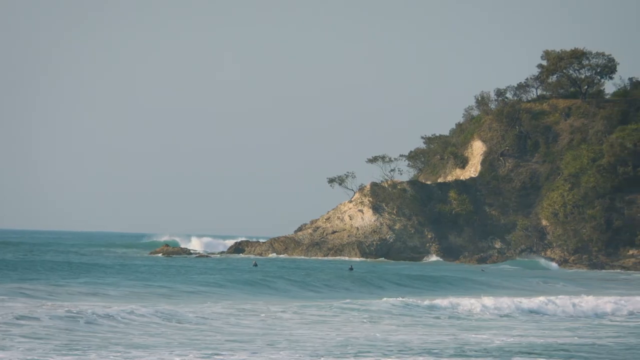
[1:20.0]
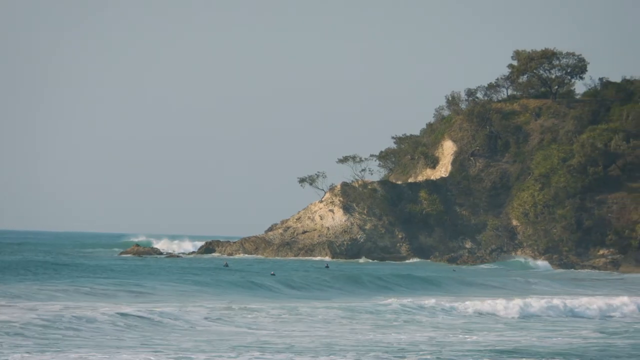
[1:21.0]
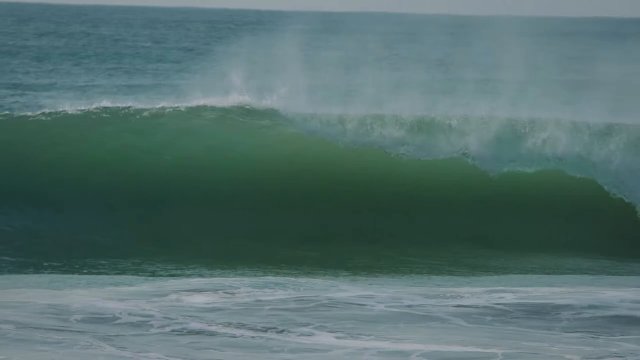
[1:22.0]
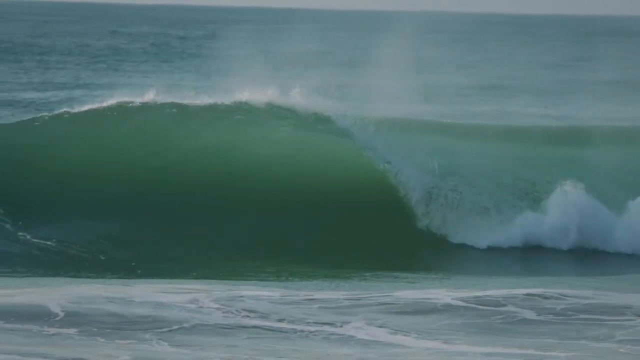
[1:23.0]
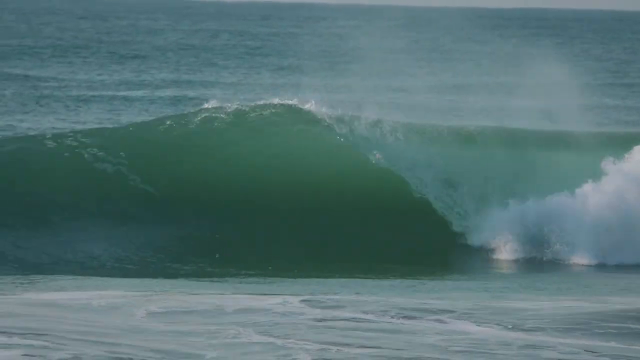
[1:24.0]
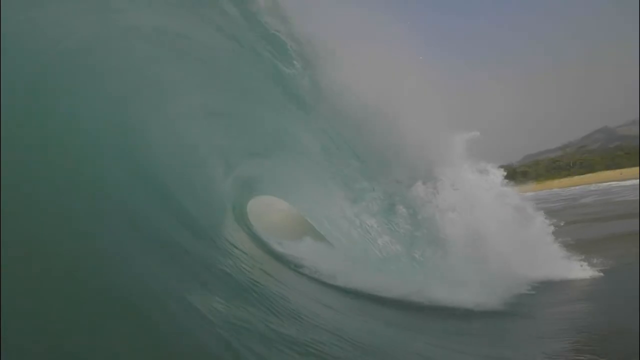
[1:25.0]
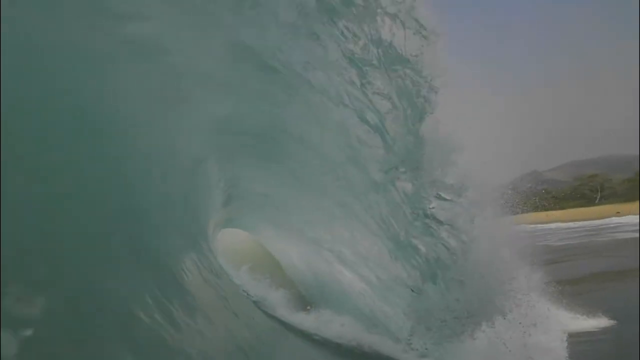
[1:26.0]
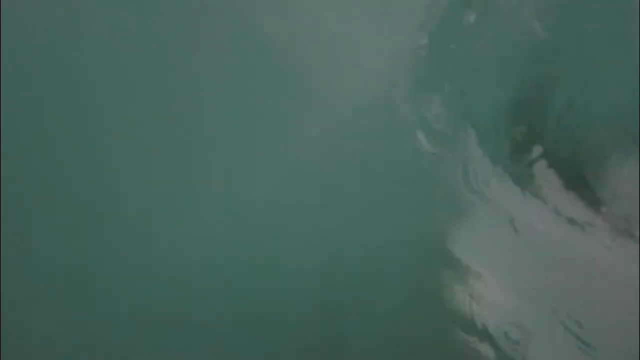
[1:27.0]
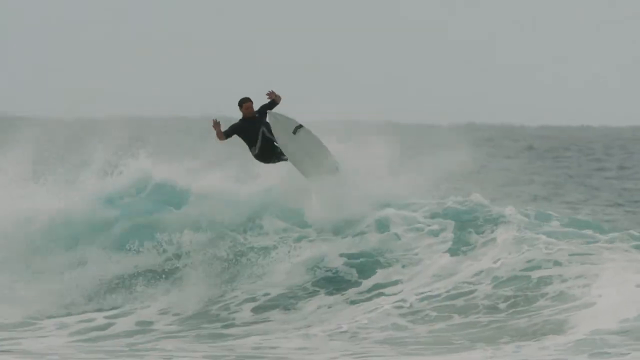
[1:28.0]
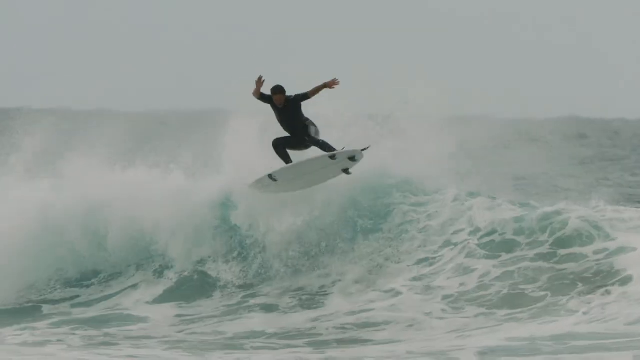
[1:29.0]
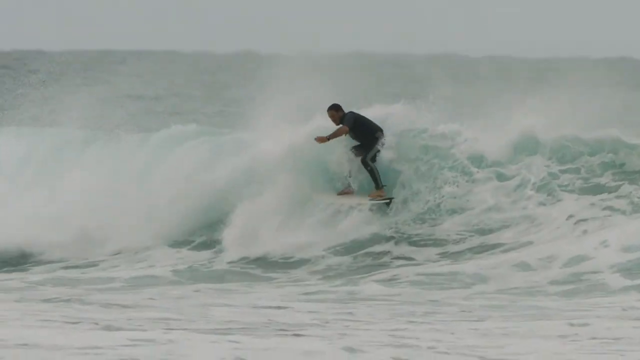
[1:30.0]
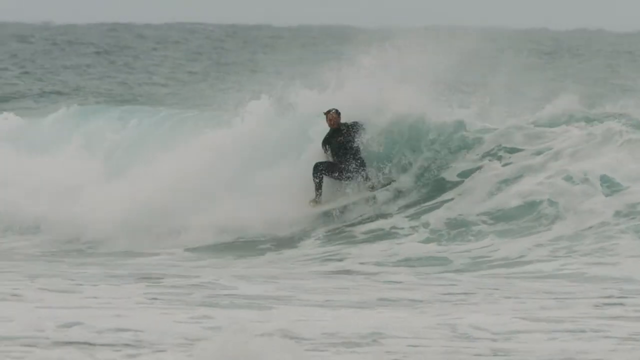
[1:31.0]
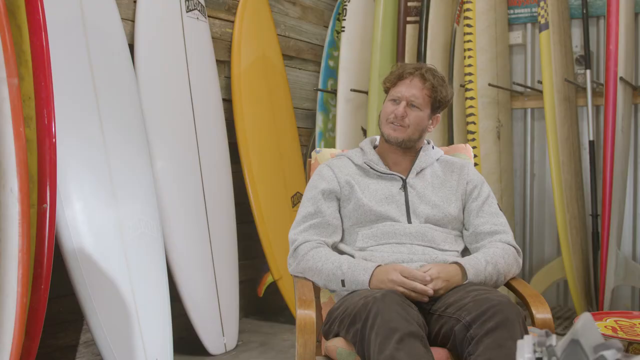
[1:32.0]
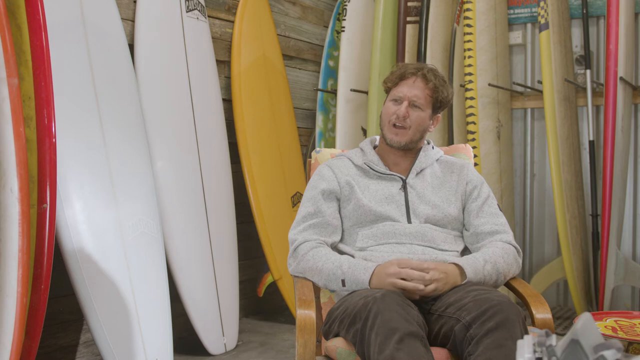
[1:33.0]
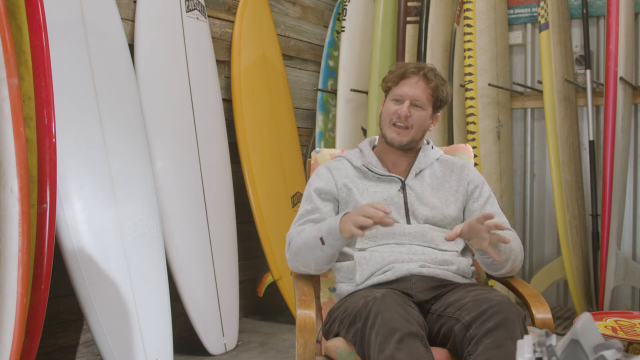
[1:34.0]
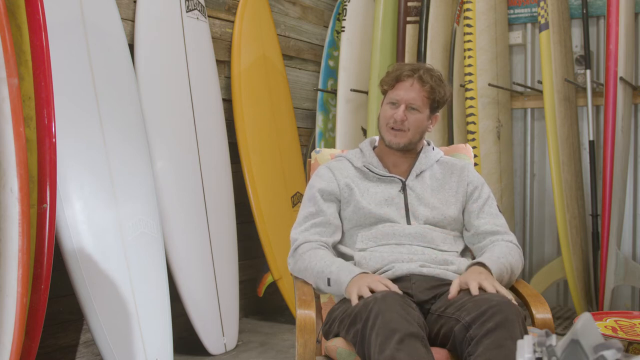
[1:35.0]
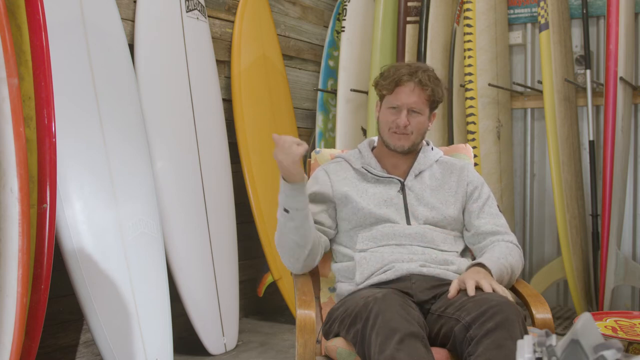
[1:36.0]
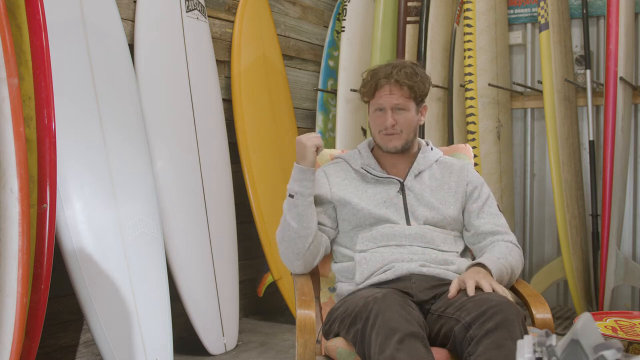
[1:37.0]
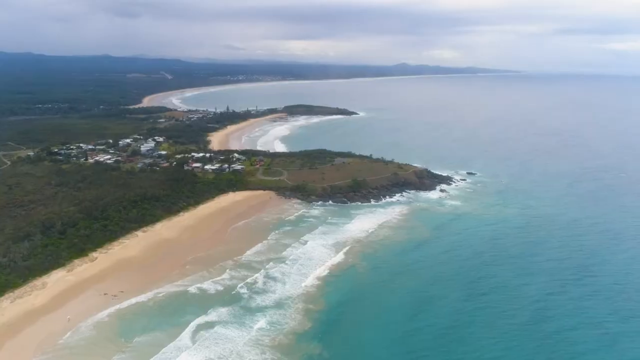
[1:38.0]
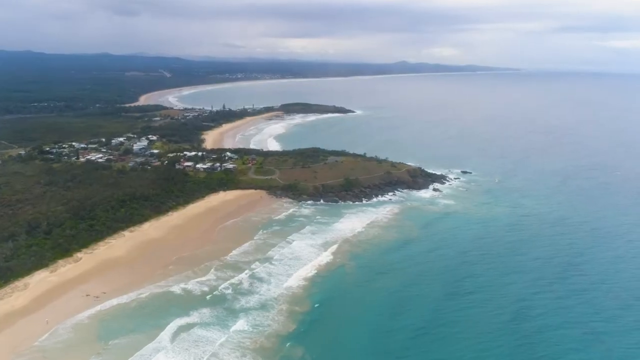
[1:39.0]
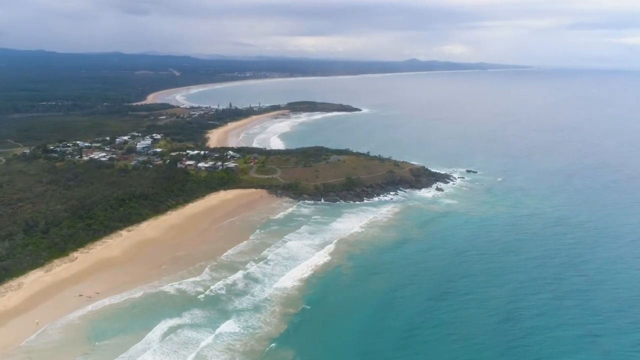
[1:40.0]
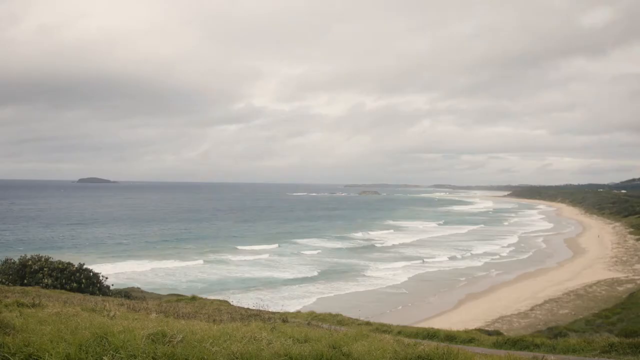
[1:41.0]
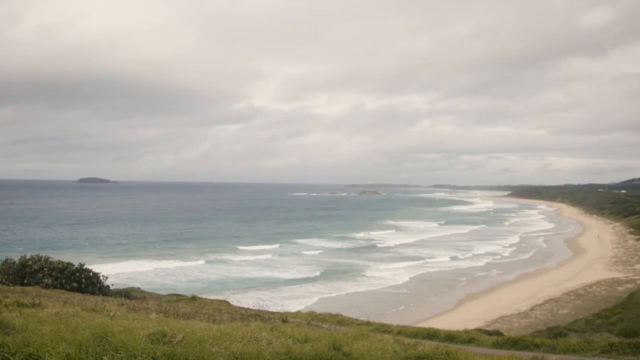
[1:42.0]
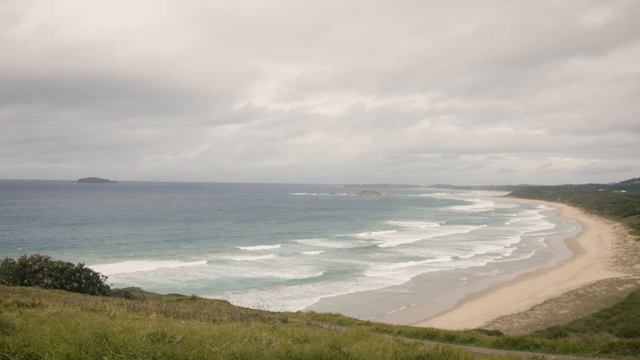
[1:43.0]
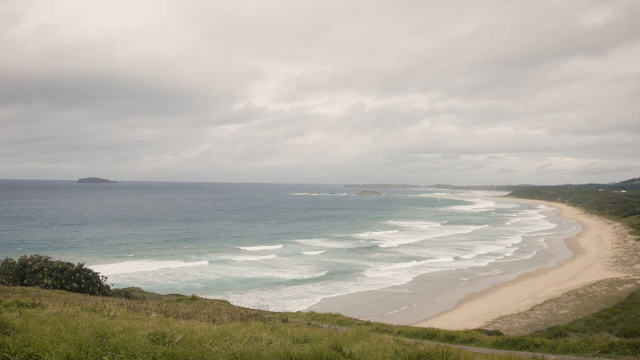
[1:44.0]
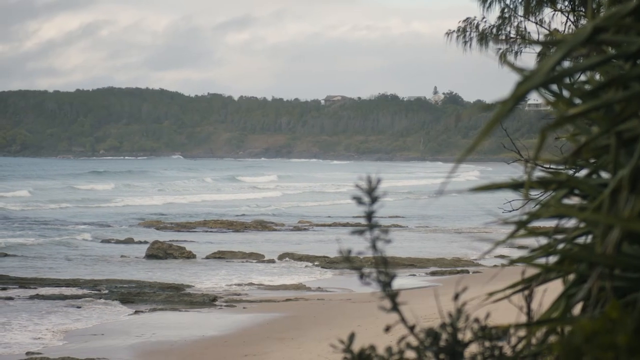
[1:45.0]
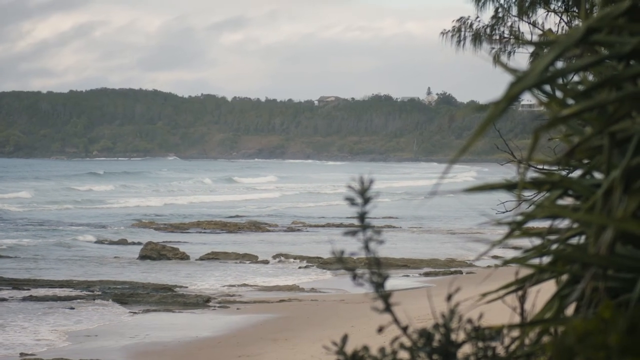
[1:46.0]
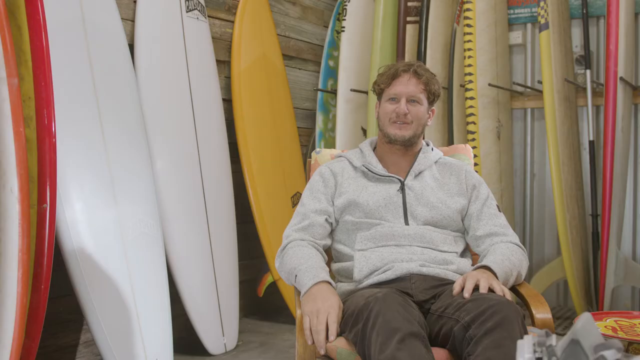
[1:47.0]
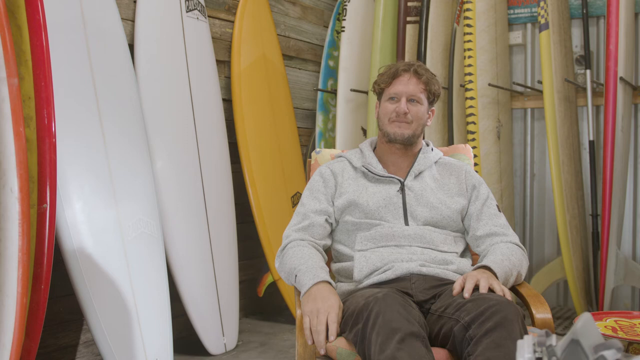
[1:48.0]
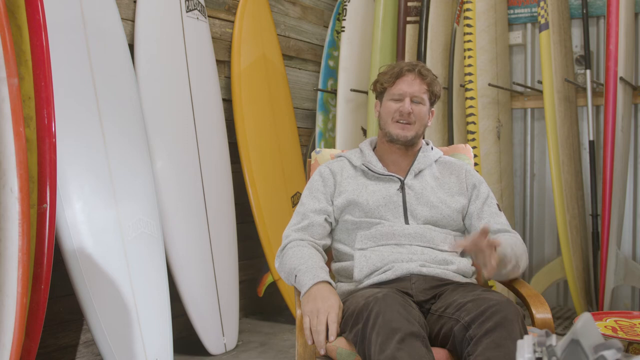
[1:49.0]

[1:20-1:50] A rockier cliffside of the mountain appears, with maybe two people swimming out there. A wave rolls and breaks, throwing up a lot of white foam. The camera view switches to inside the barrel of the wave. A man surfing becomes airborne from jumping the wave and appears to land on the back part of the surfboard with the fin, which makes him lose his balance and fall back into the wave. The video switches back to the man in front of the surfboards talking. An aerial view then shows the beach and a green, grassy piece of land extending out, with the beach starting again on the other side.